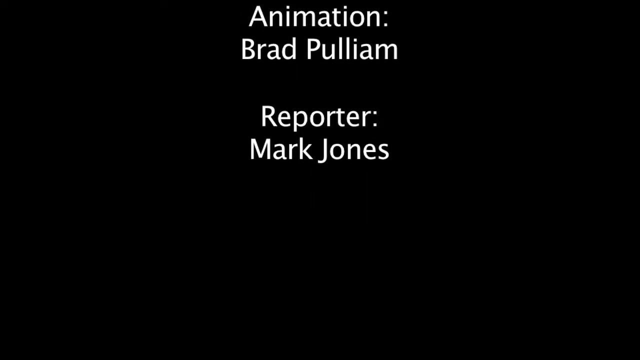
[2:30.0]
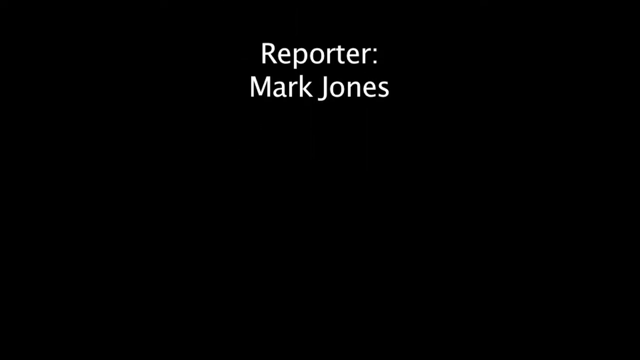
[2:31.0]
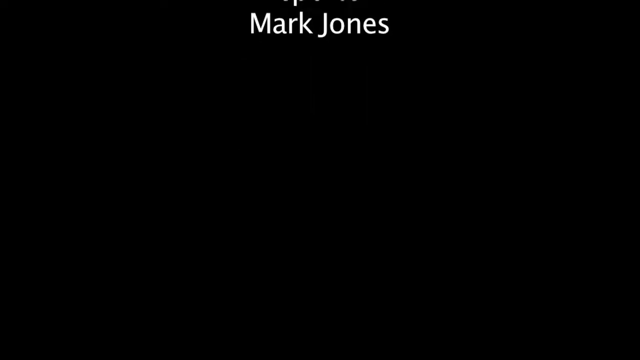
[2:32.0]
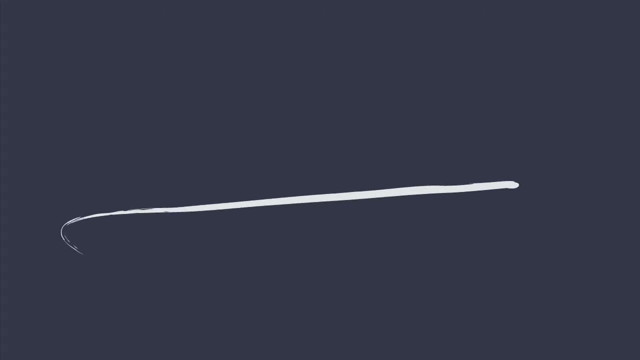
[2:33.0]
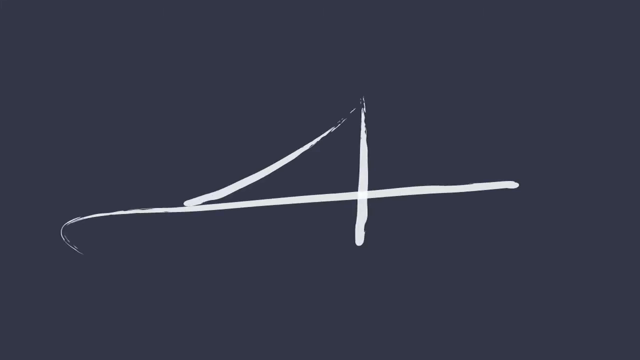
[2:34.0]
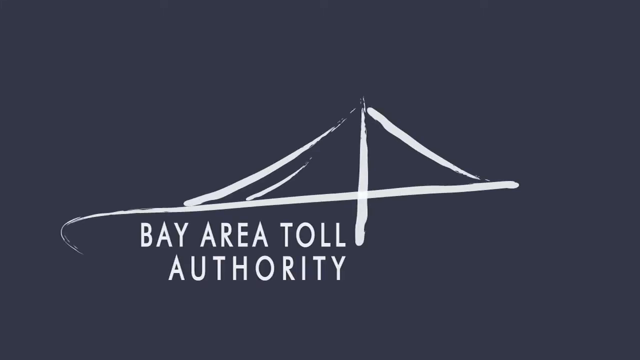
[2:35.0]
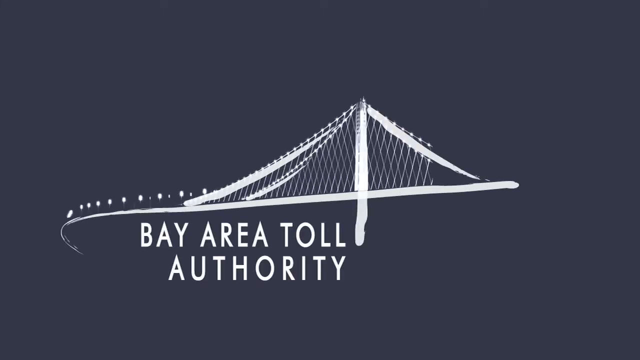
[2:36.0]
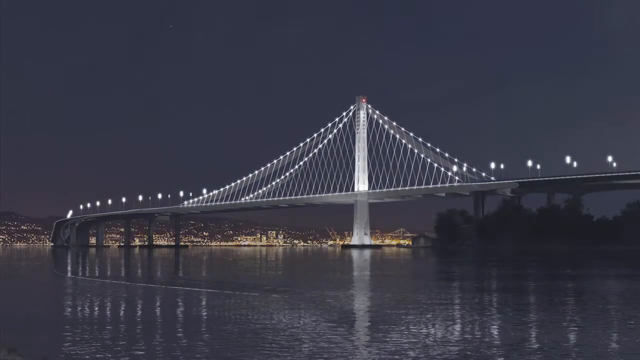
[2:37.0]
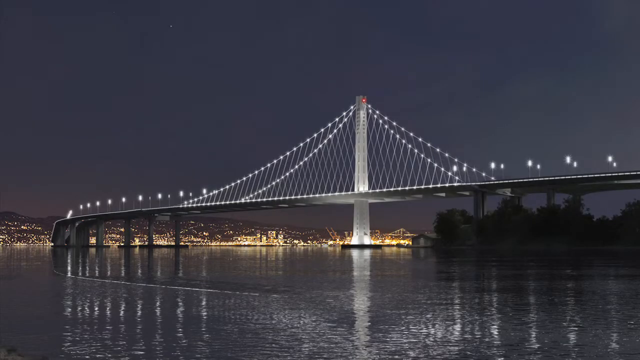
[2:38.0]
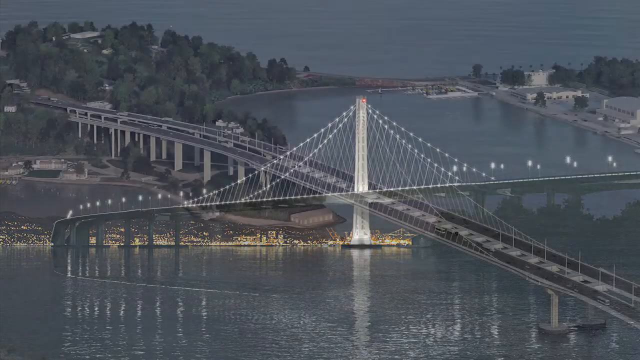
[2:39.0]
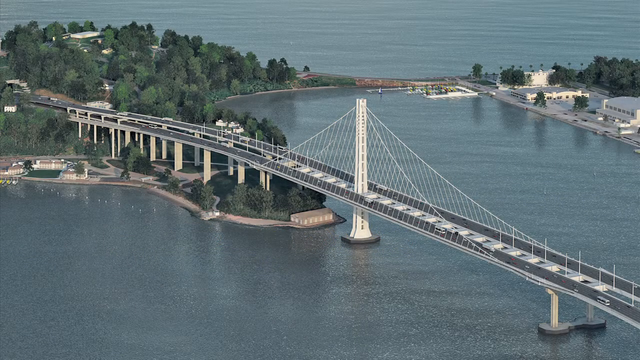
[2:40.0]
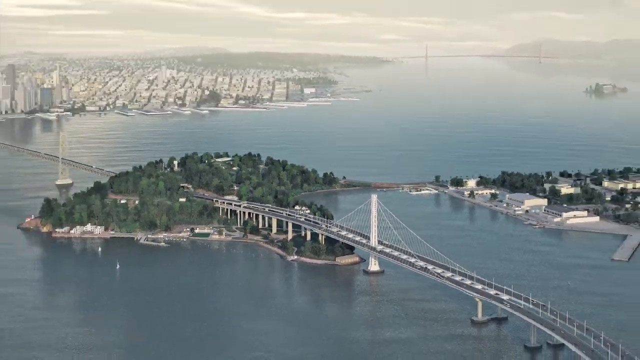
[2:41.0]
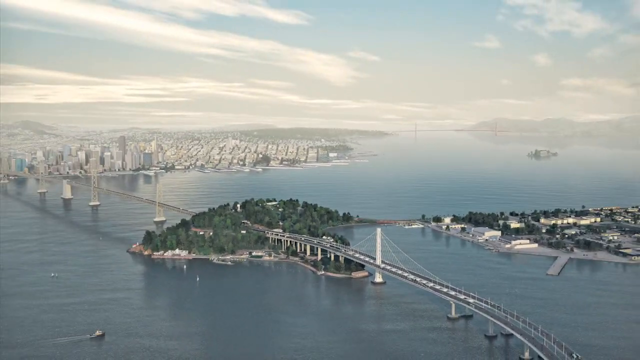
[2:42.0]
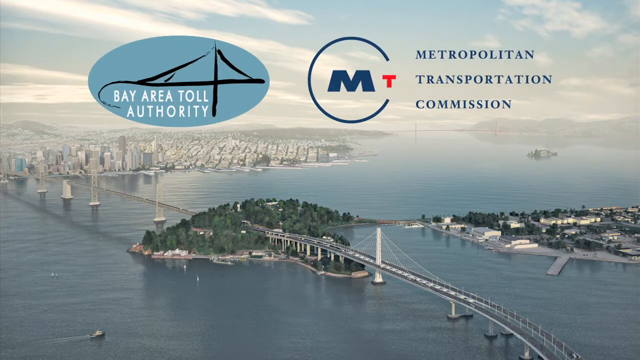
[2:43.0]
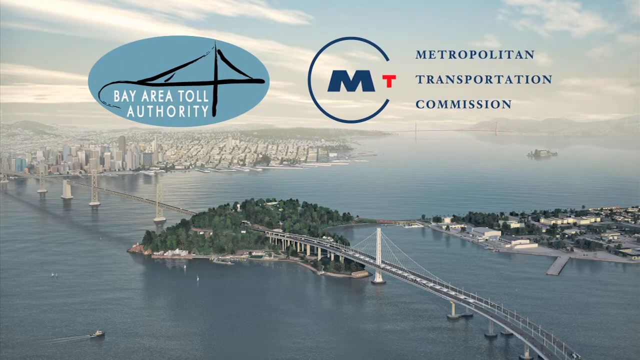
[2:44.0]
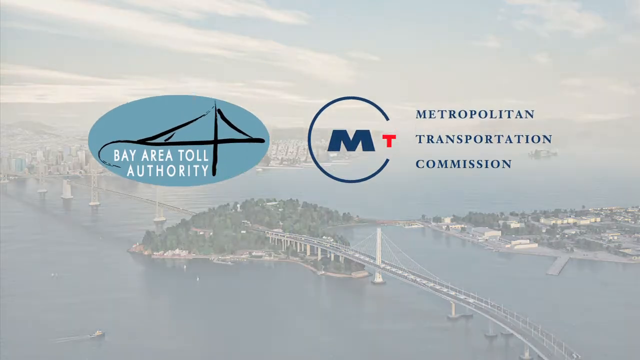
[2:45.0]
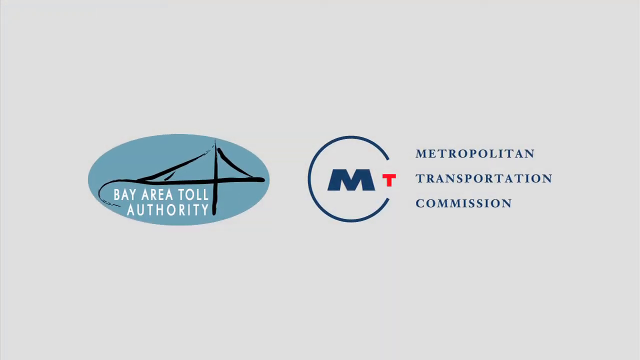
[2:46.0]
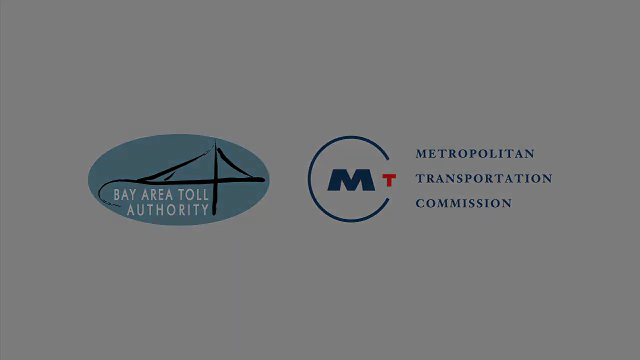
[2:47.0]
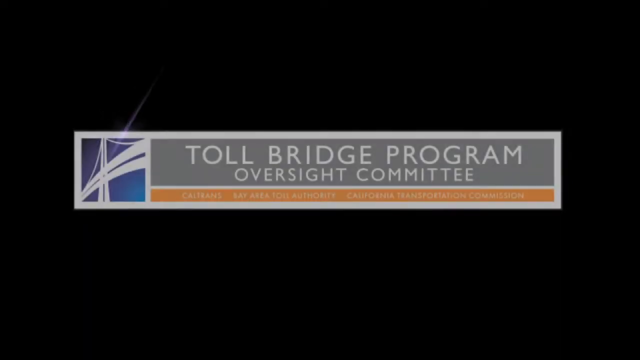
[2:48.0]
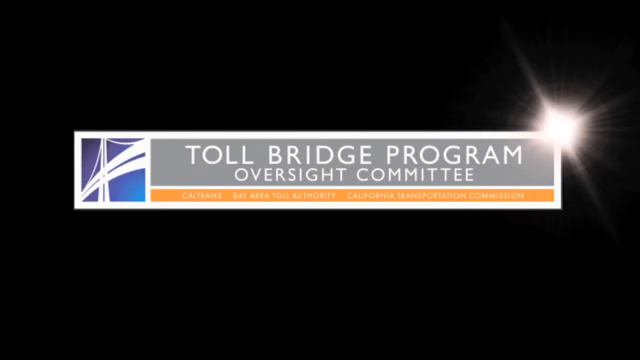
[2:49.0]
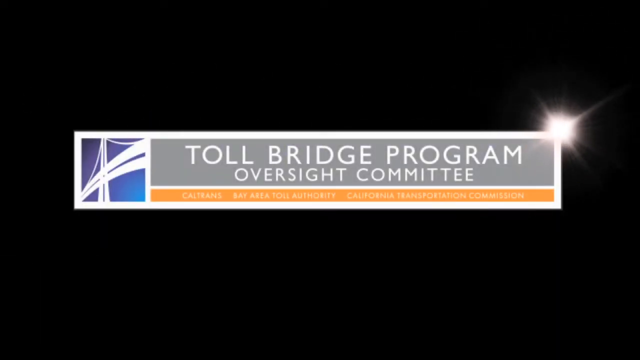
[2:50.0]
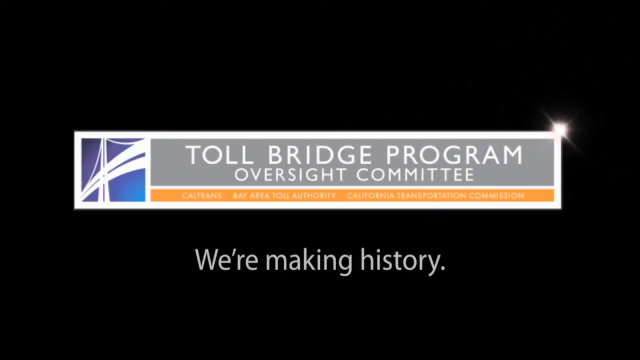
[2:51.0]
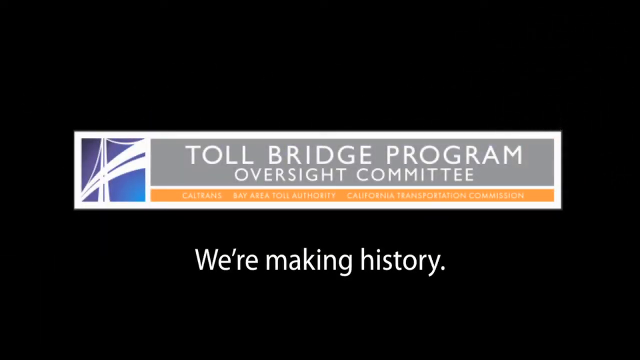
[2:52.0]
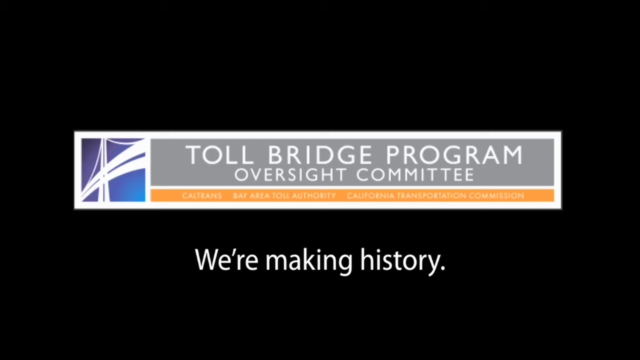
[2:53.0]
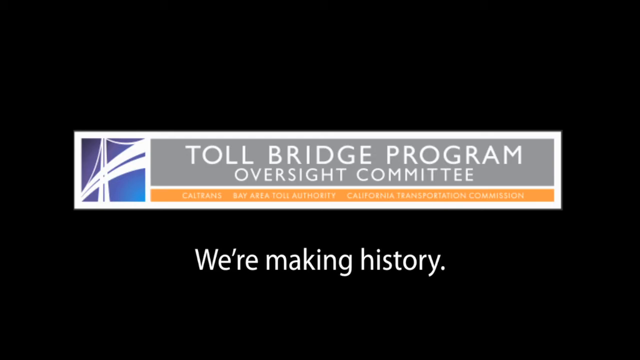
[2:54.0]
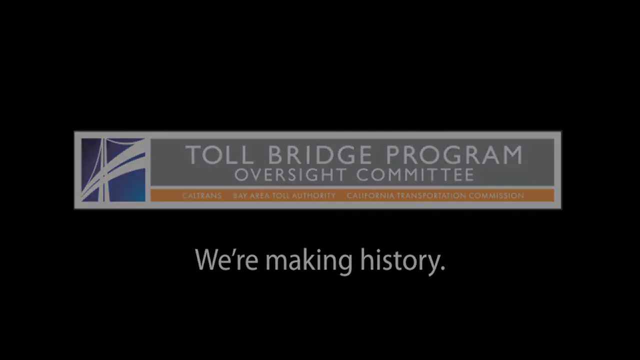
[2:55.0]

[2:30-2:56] The credits finish rolling, showing "animation Brad Pulliam" and "reporter Mark Jones" in white. The names scroll and disappear, and the screen goes all black. The background turns gray, and a white line with a little curve on one end goes across it; another shorter line goes through it and keeps getting higher as different lines connect to form the Bay Area Toll Authority logo, written in all uppercase letters in a lighter gray than the background. It turns white, and more details of the bridge fill in. A real image of the bridge at nighttime appears, with lights on in the distance, then an image of the bridge with trees and water surrounding it. The camera pans up to an overhead view showing the city and skyscrapers in the background, and the sky comes into view. The Bay Area Toll Authority logo and the Metropolitan Transportation Commission logo come across the screen and remain as the bridge parts disappear. The light gray background turns darker gray, then black. "Toll Bridge Program Oversight Committee" comes up on the screen, with "Caltrans Bay Area Toll Authority California Transportation Commission" underneath in orange. Lights go off in the background, and below that in white it says "we're making history". The screen goes black.